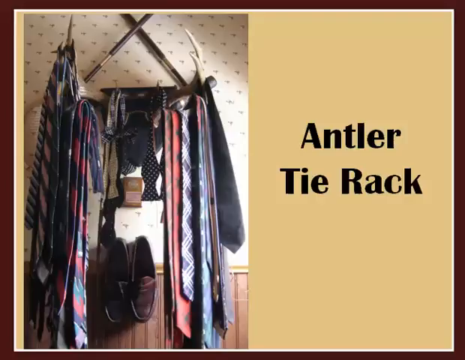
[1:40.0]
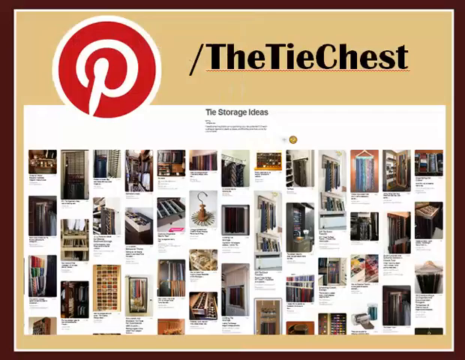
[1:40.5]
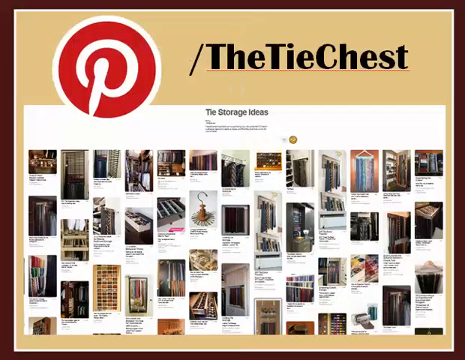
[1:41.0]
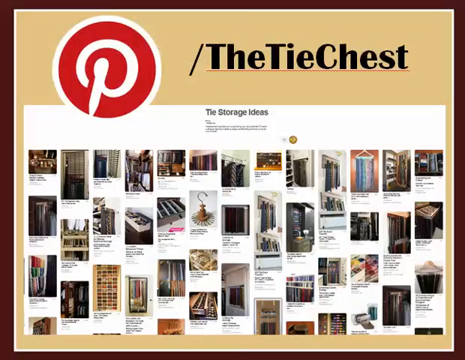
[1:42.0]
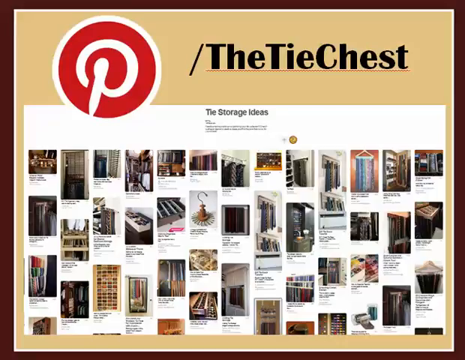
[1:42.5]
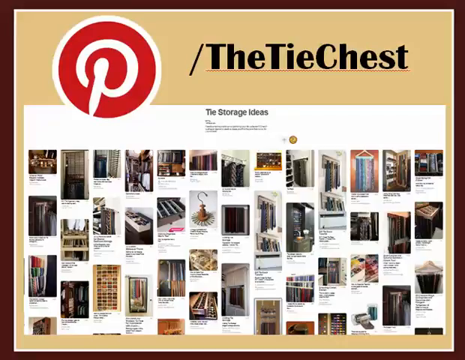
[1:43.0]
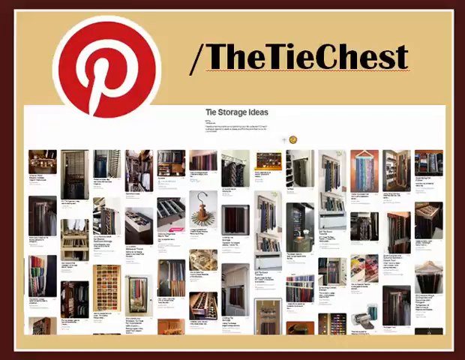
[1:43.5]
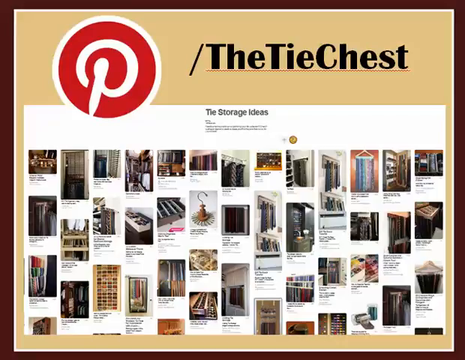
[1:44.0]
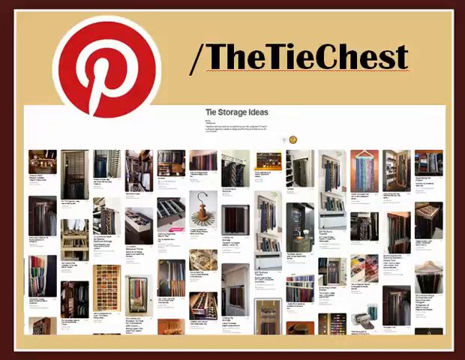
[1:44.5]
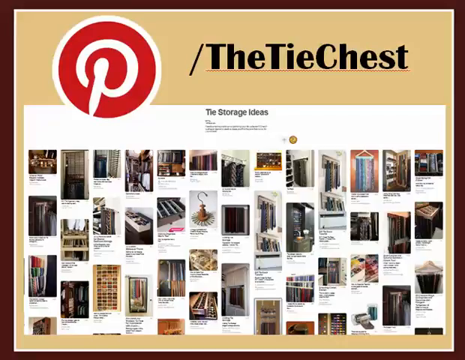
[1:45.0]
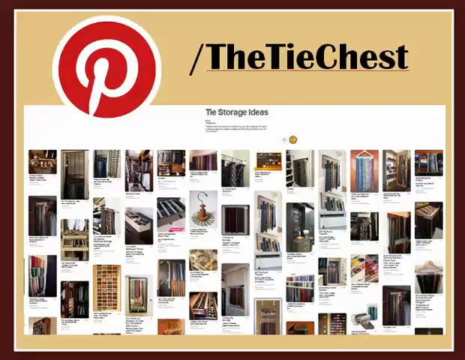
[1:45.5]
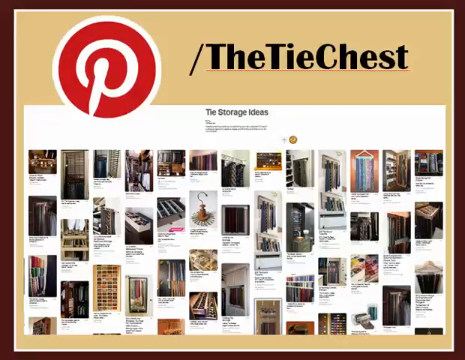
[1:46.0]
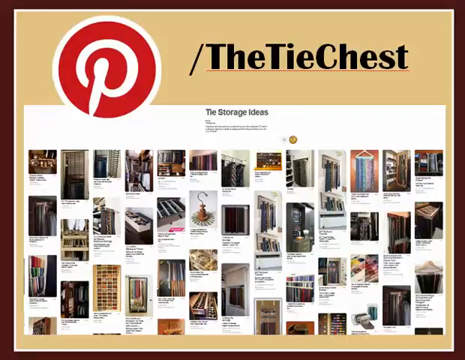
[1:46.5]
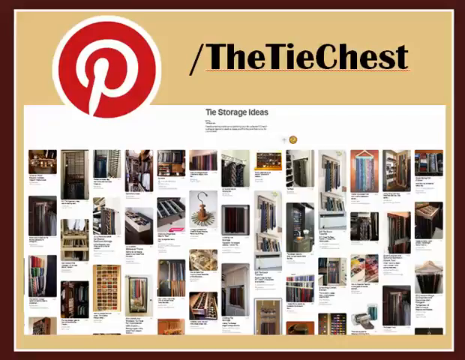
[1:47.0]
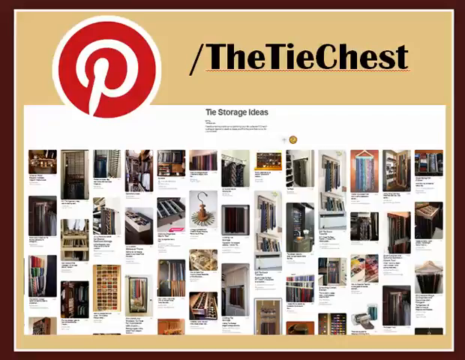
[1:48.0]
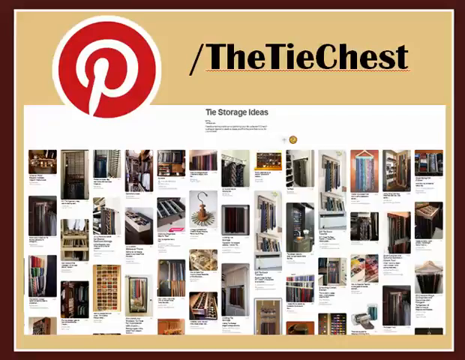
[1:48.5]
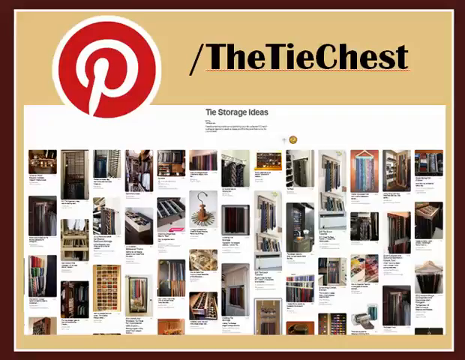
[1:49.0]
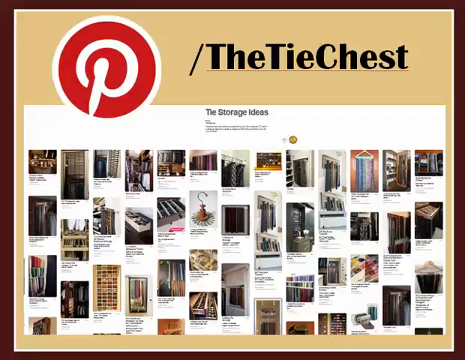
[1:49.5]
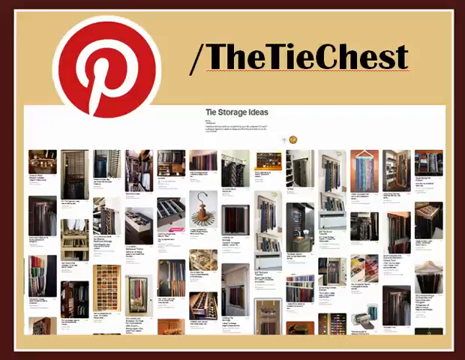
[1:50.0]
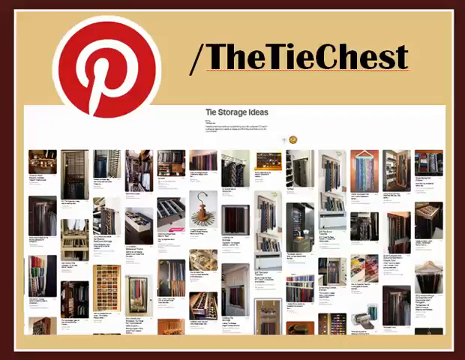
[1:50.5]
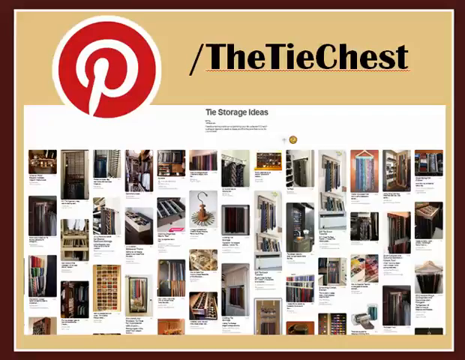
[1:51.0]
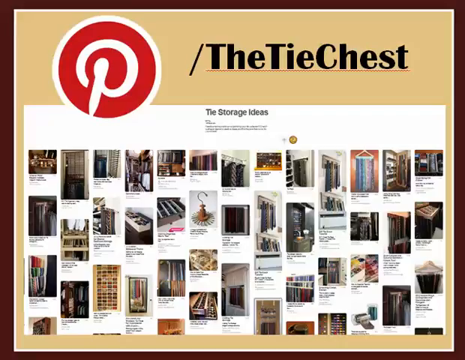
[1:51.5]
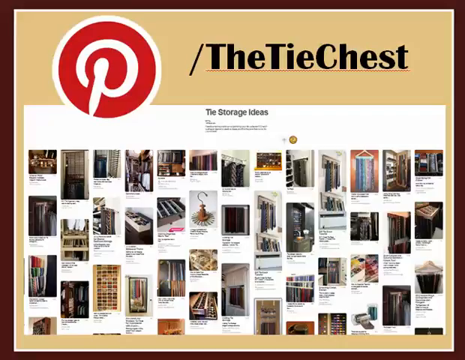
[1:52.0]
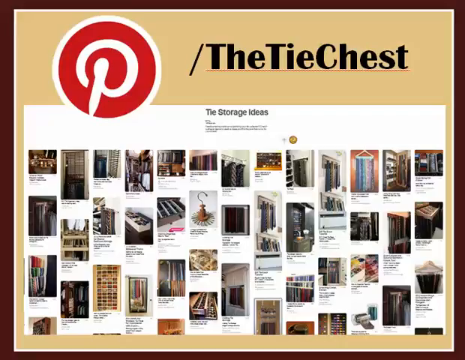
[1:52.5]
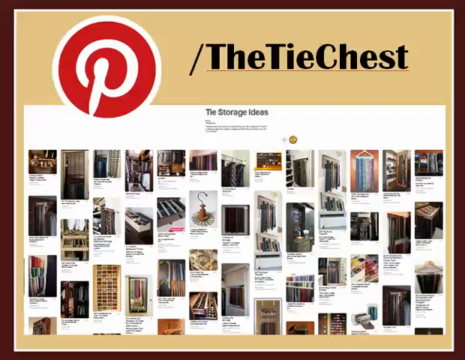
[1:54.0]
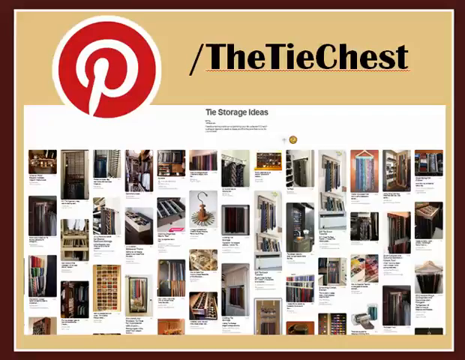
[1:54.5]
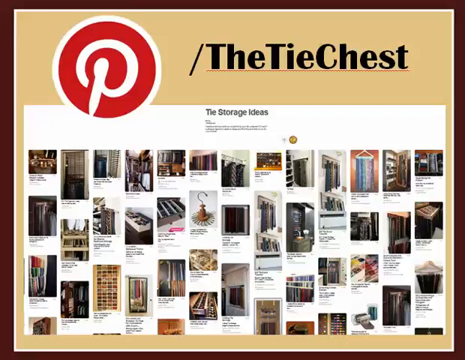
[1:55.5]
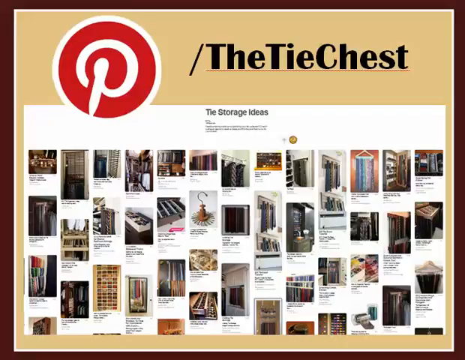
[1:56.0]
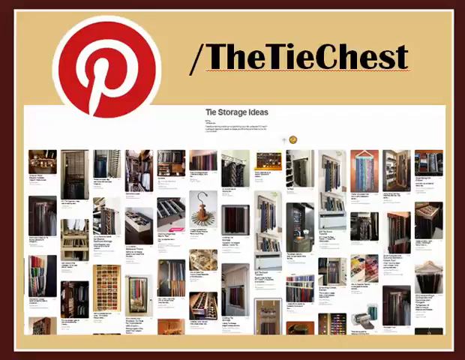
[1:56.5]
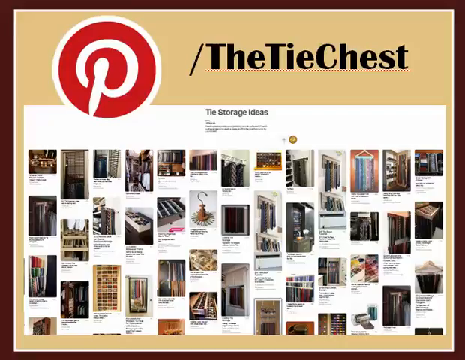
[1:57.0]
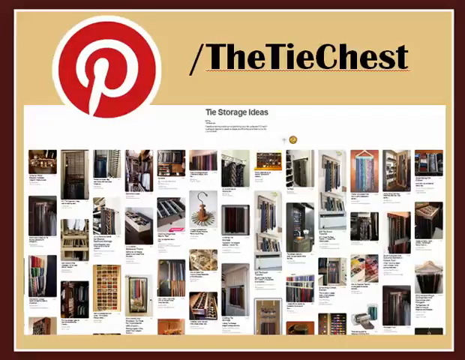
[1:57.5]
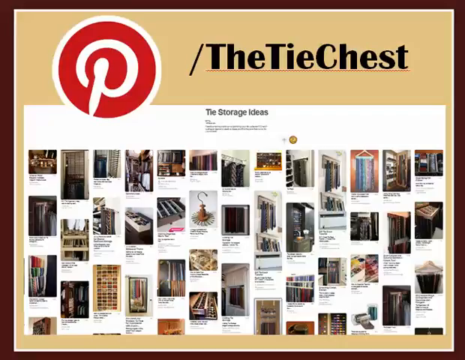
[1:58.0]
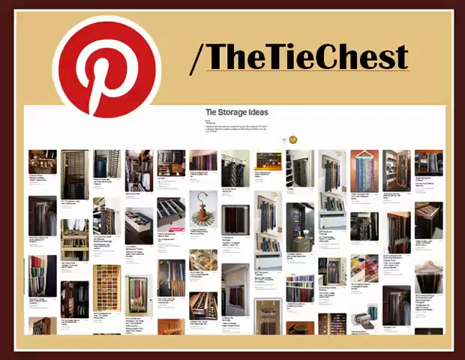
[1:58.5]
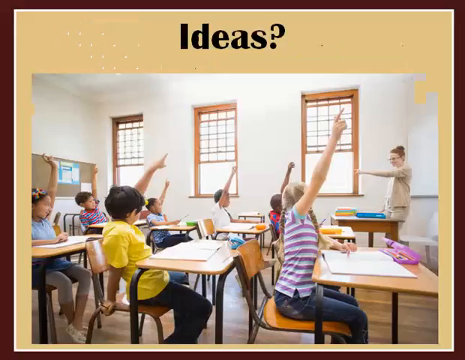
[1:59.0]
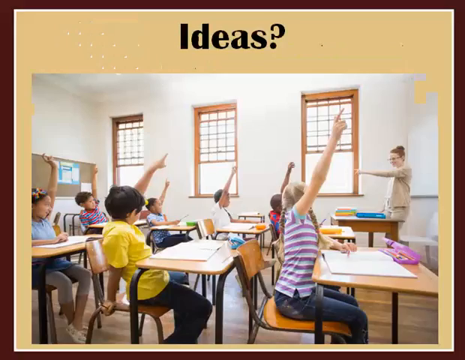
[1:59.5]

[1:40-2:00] The antler tie rack is shown, with the words "antler tie rack" written on the right-hand side. On the left is a picture of a room with a pair of antler horns mounted on a black object that looks shield-shaped. The rack holds both regular long neckties and bow ties. The bow ties are in the middle, in different colours and designs, such as a black bow tie with white dots. Behind the bow ties is a small wooden object with a gold item in front, and below is something that looks like a pink paper with writing on it. Below that is a pair of brown formal men's shoes that look like they are made of leather. The longer ties are hung directly on the upper sides of the antler horns, in different colours and designs including red, purple, blue, brown and black. The antler horns point upwards, and the wall is white with some designs on it.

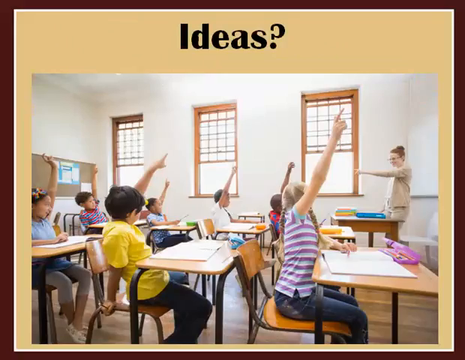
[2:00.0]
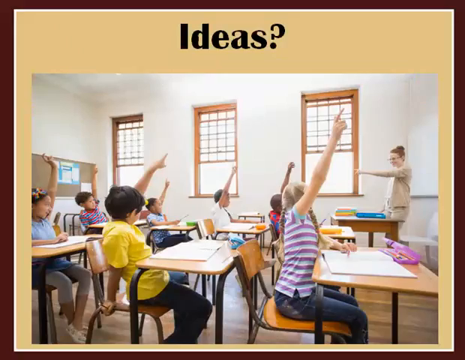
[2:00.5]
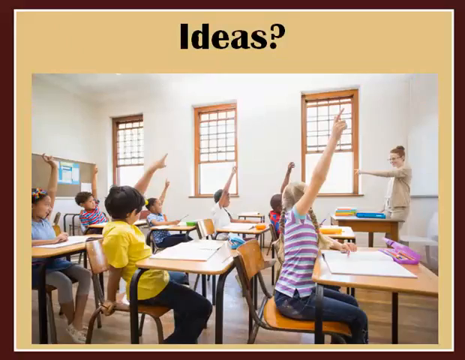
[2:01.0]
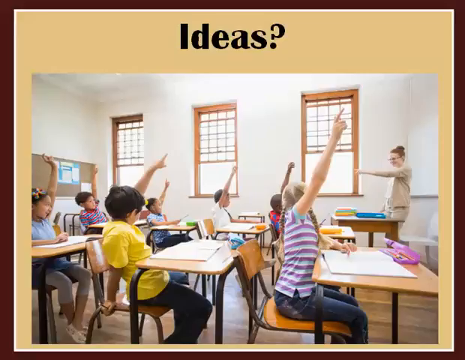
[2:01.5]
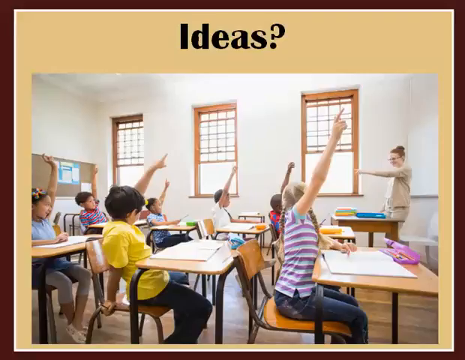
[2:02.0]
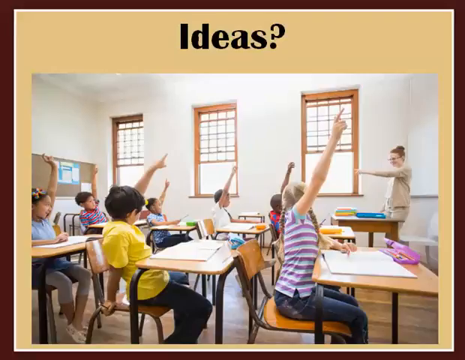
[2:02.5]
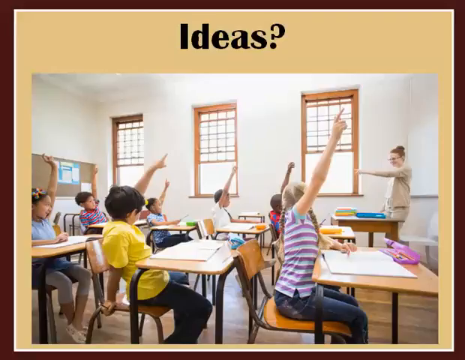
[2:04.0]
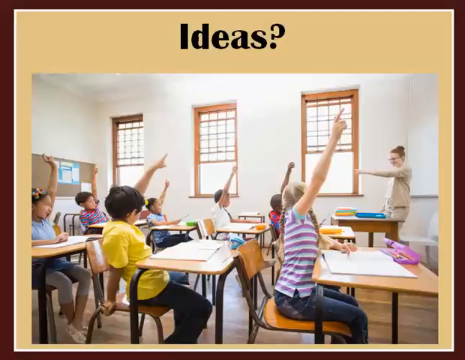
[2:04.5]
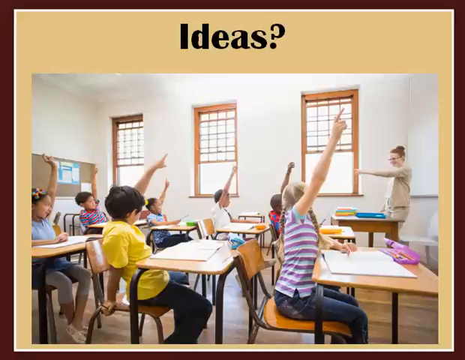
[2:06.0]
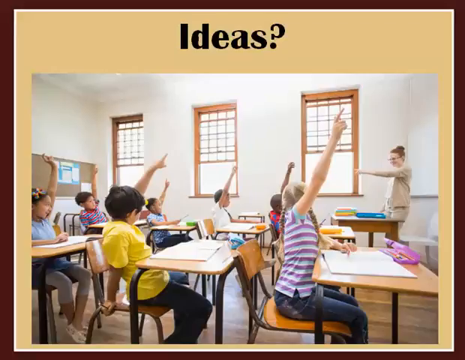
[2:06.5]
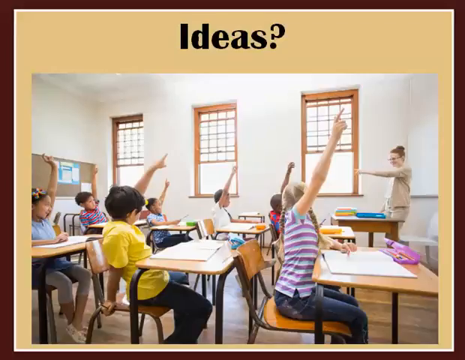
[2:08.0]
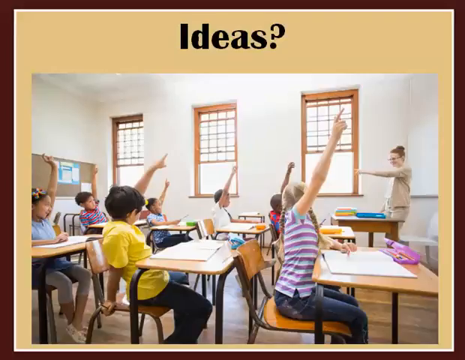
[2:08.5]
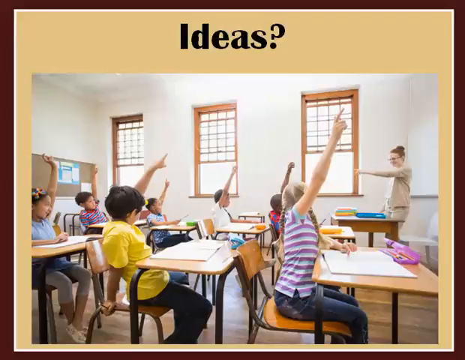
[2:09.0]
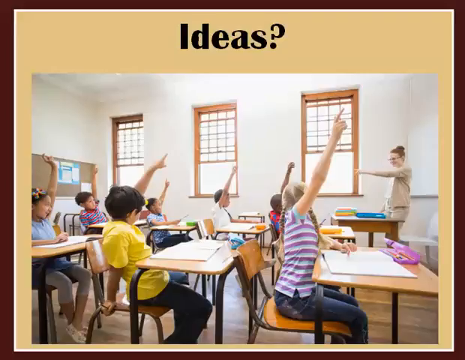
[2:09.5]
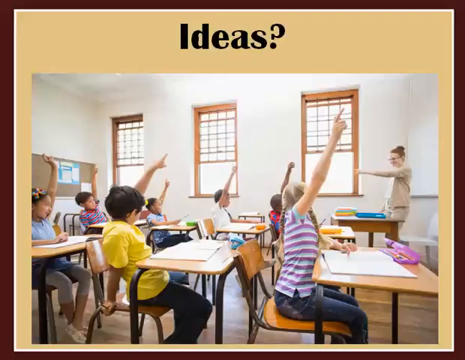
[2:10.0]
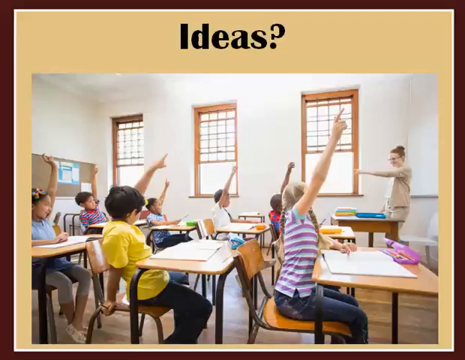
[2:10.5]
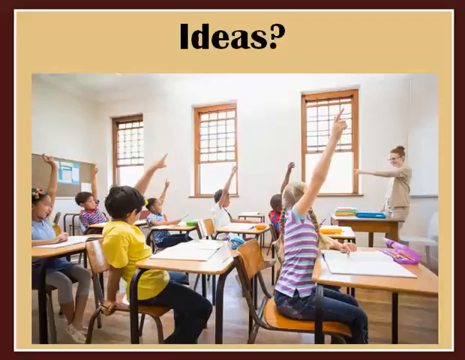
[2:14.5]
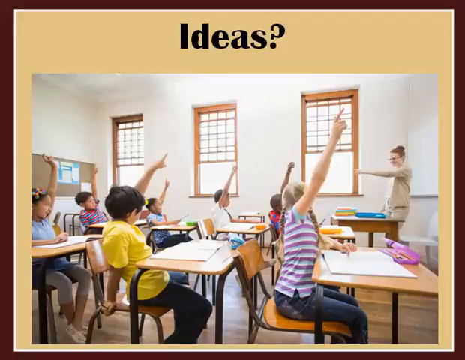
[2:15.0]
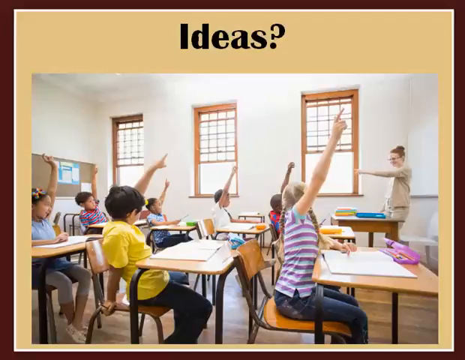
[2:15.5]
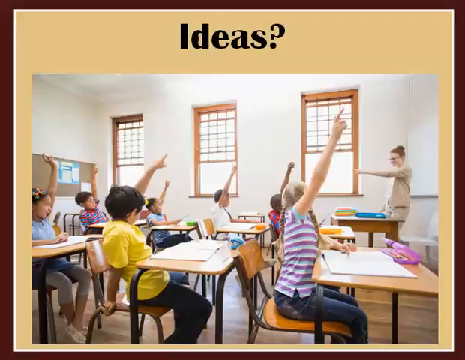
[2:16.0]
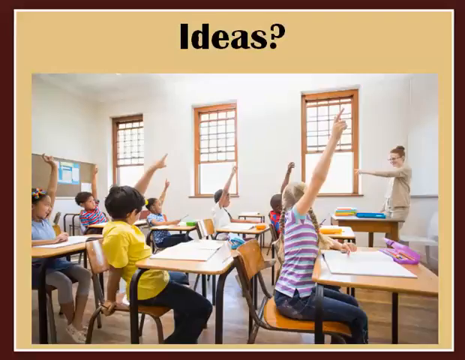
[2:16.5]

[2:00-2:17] The word "Ideas?" appears as a title at the top on a nude background. Below it is a picture that looks torn at the upper right corner. The picture shows pupils in a class seated at their desks and chairs with open books on their tables, all with their hands raised. In front of them is a female teacher wearing glasses, standing on her table, with some books visible on the table; she is pointing towards a student. Seven students are visible, three girls and four boys. Behind the teacher is a whiteboard.